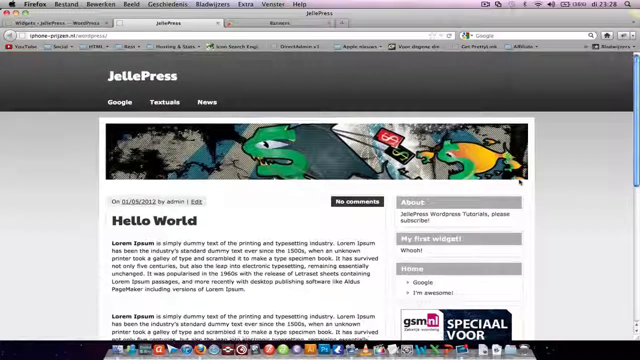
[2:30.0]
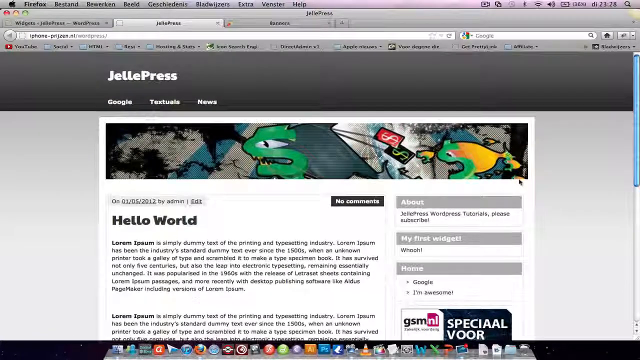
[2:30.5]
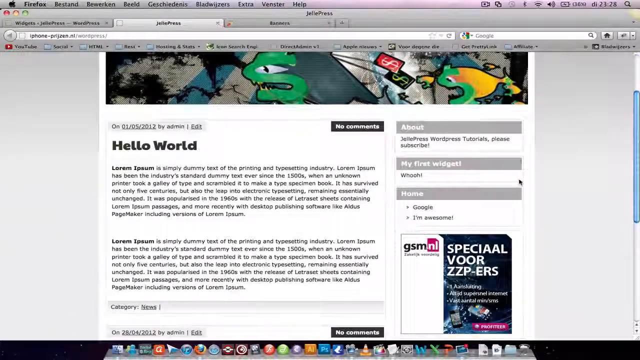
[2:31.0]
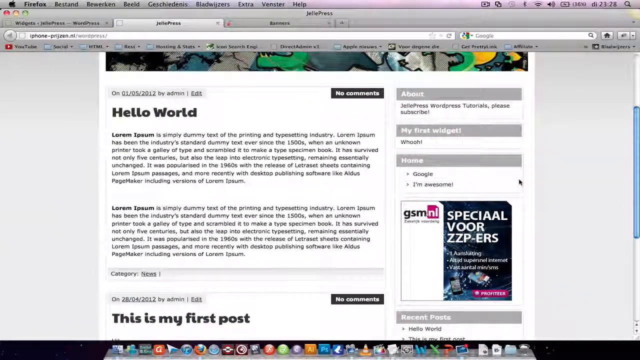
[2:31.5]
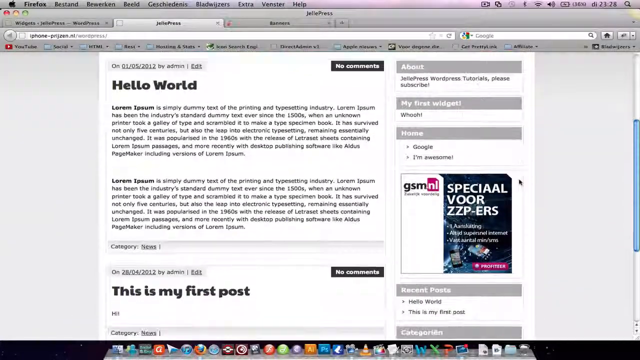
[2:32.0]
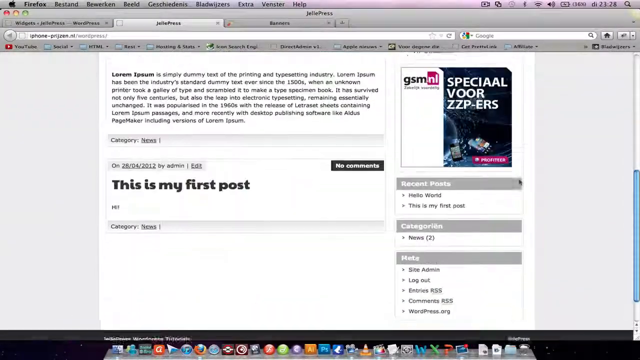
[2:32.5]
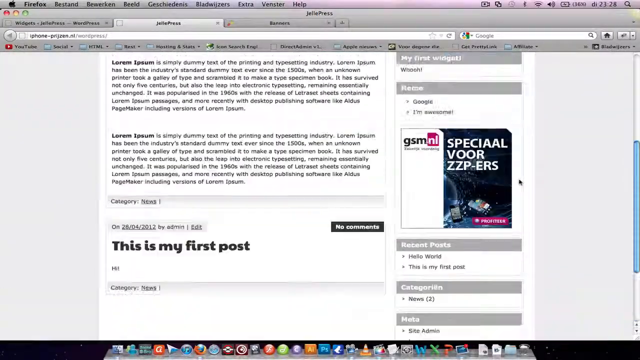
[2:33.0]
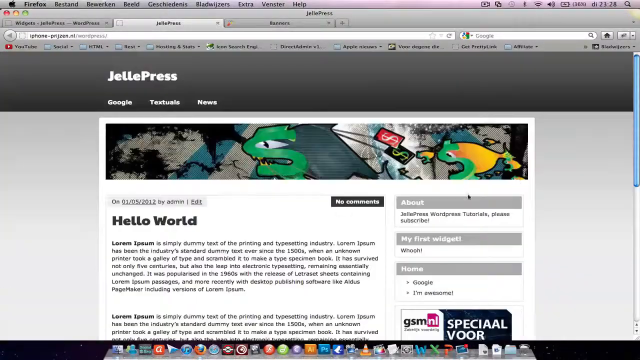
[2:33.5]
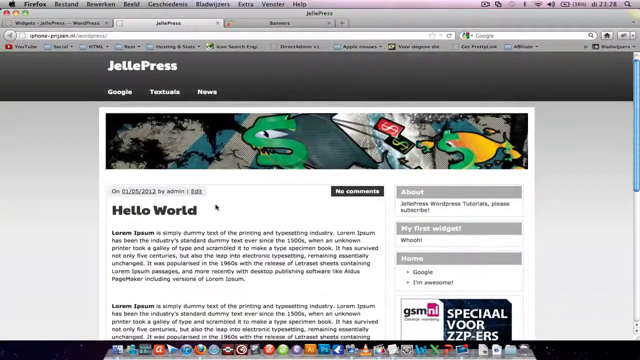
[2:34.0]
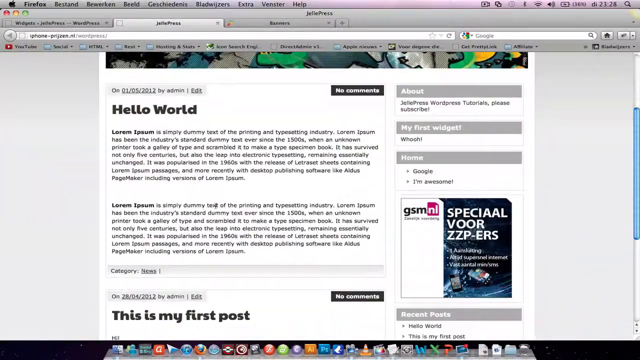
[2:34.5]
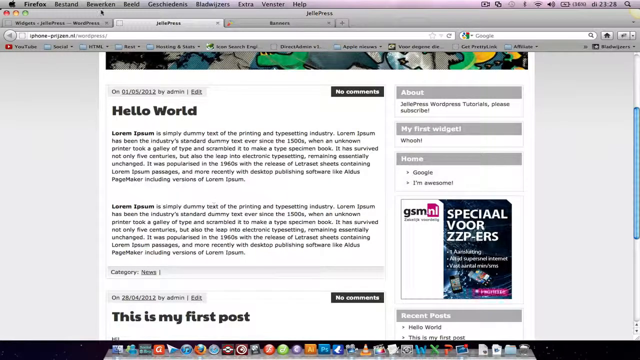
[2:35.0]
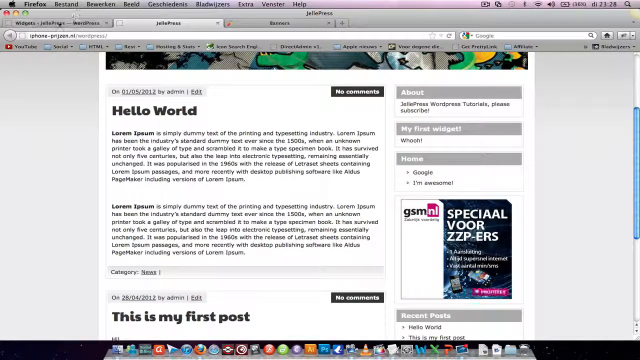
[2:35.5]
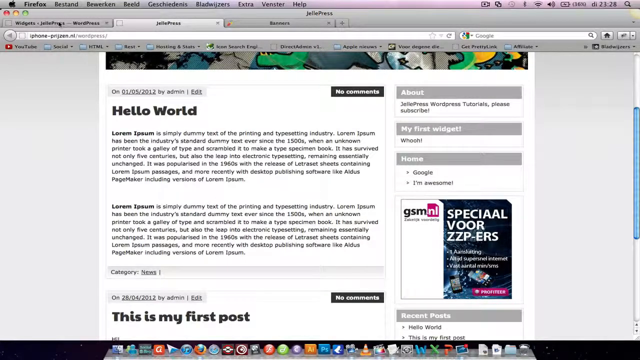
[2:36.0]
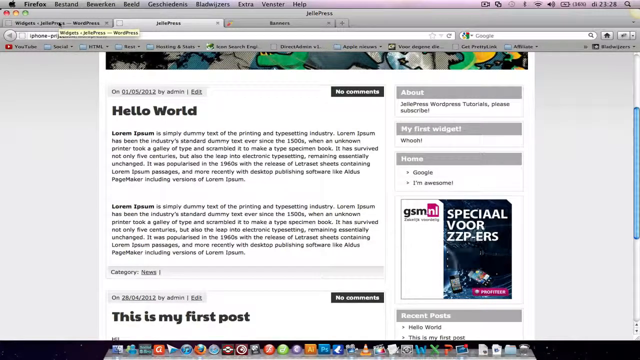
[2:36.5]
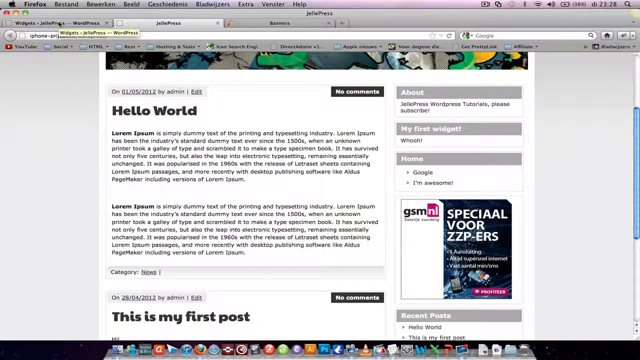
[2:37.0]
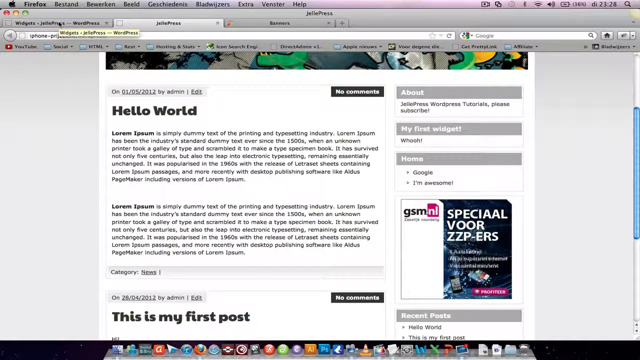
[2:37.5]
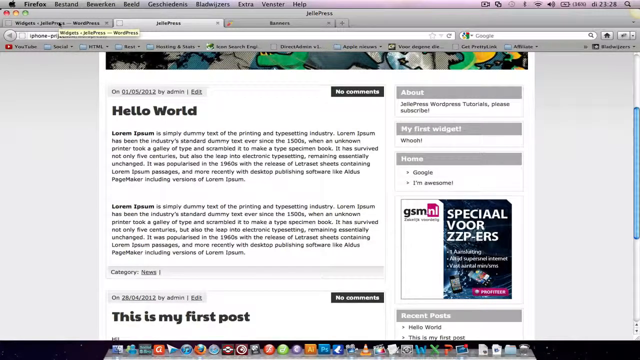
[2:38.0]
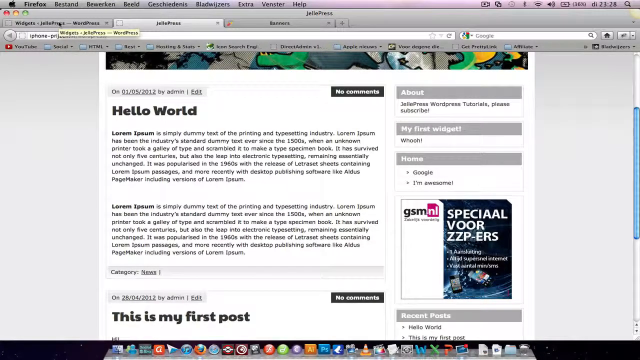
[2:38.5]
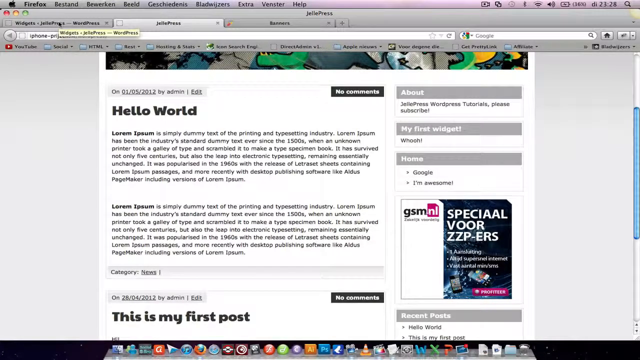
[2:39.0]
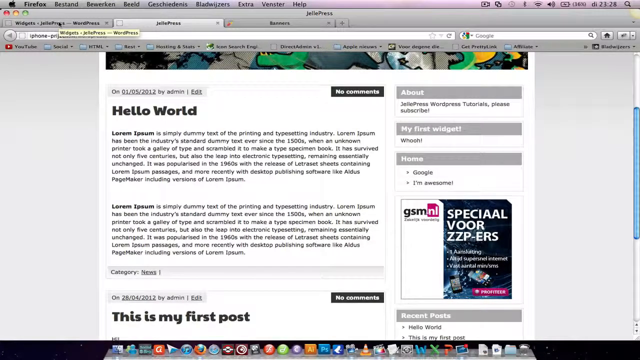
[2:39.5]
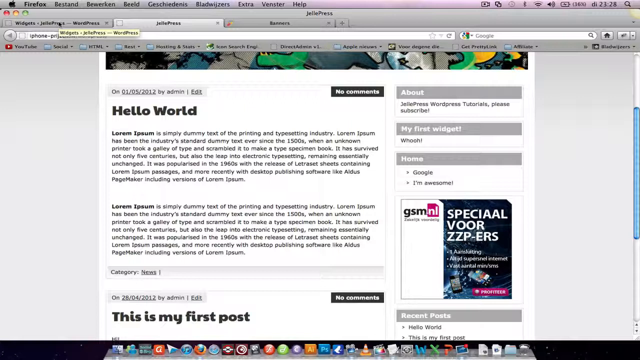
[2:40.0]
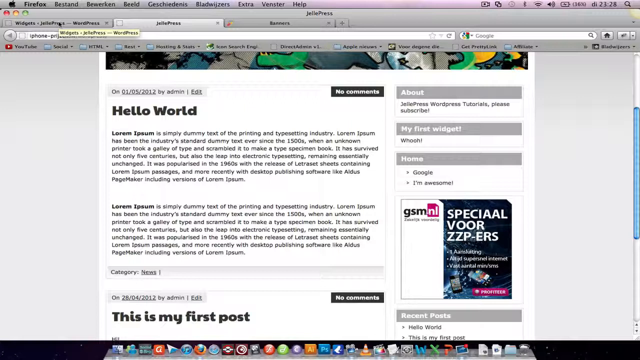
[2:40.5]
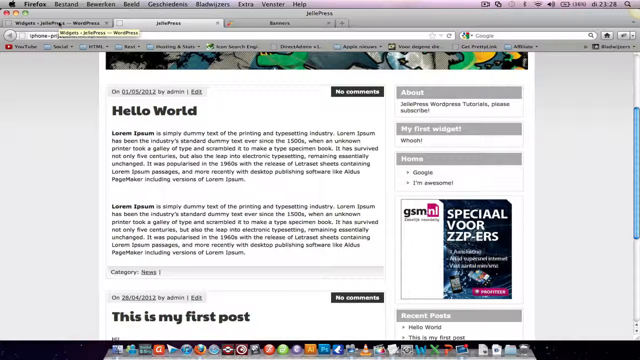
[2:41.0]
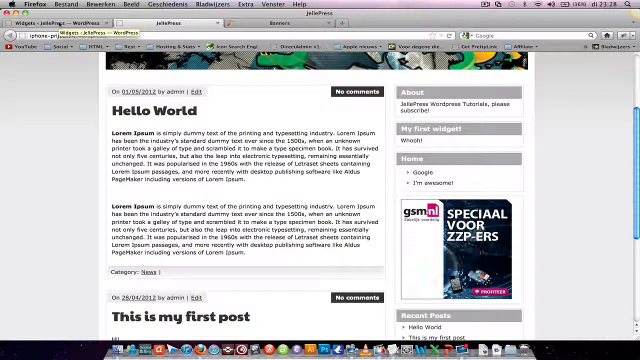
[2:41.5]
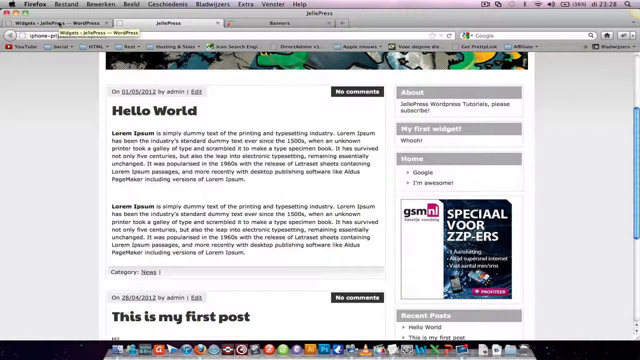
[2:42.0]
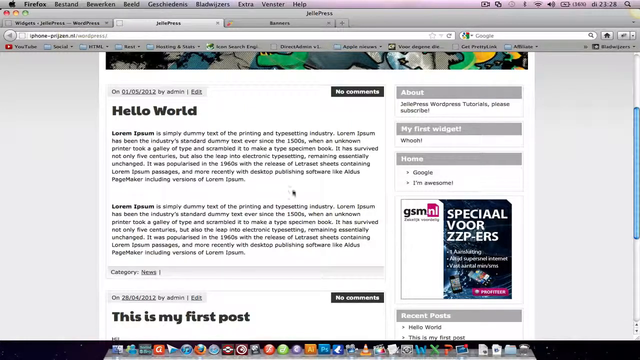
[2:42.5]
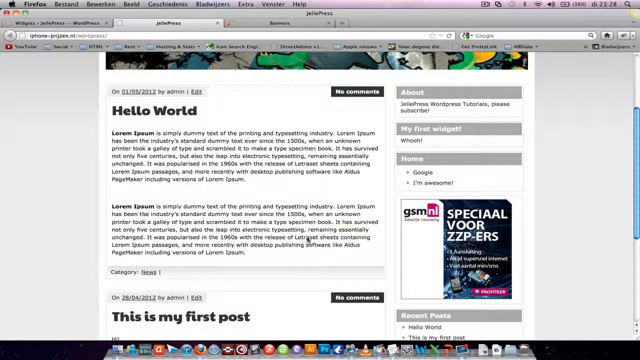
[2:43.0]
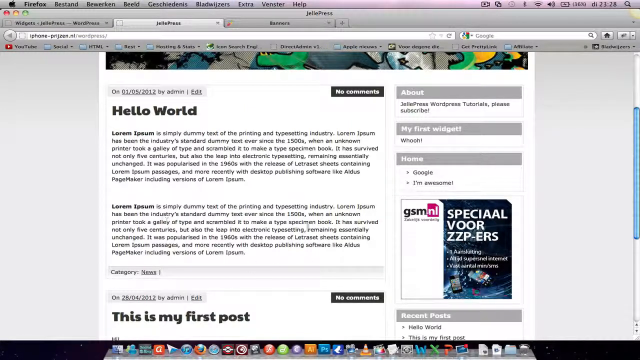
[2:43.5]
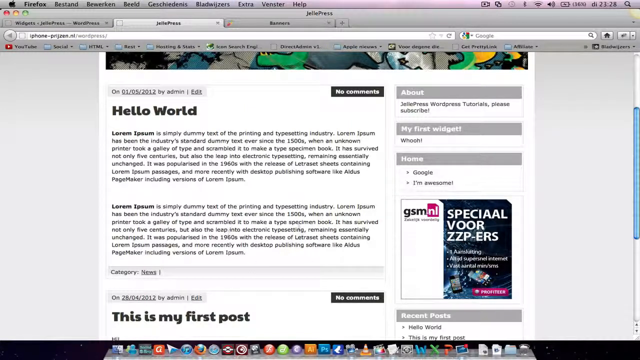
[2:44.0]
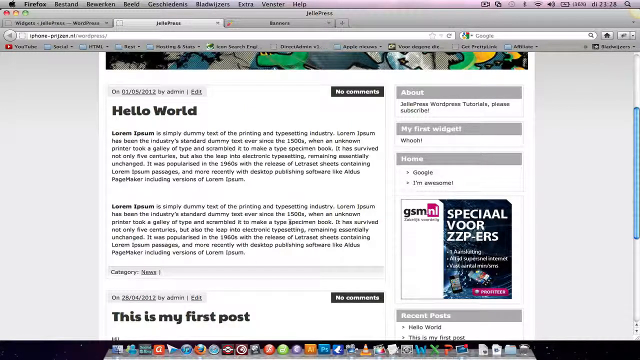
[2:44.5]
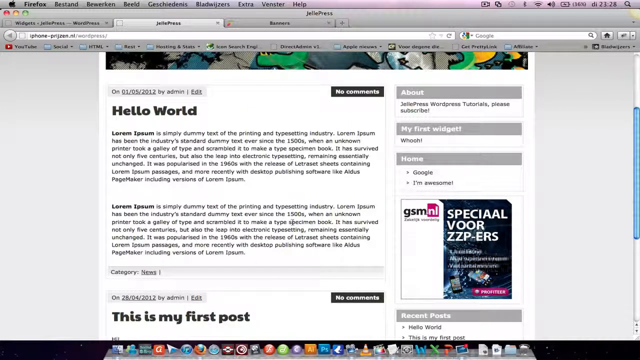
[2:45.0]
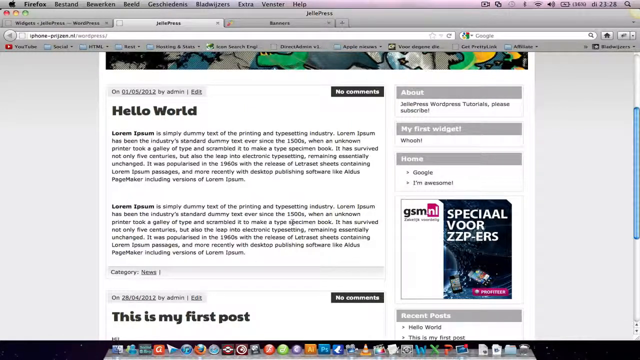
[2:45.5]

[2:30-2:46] The cursor moves up and down the page, goes back to WordPress, and then moves around looking at the hello world post. When the browser tab is touched, it reads widgets for Jelle Press / WordPress, in yellow. The two paragraphs on the post are the same, reading "Lorem Ipsum is simply dummy text of the printing and typesetting industry. Lorem Ipsum has been the industry's standard dummy text ever since the 1500s when an unknown printer took a galley of type and scrambled it to make a type specimen book." and continuing with further history of the text.